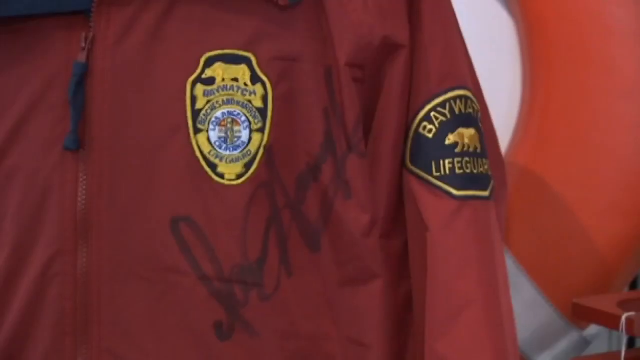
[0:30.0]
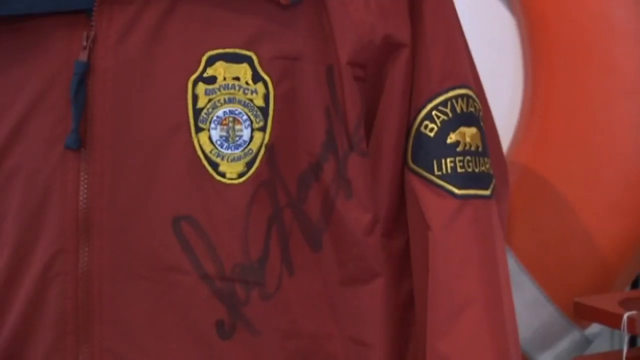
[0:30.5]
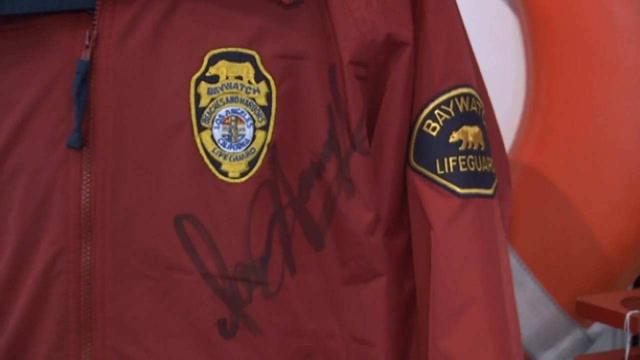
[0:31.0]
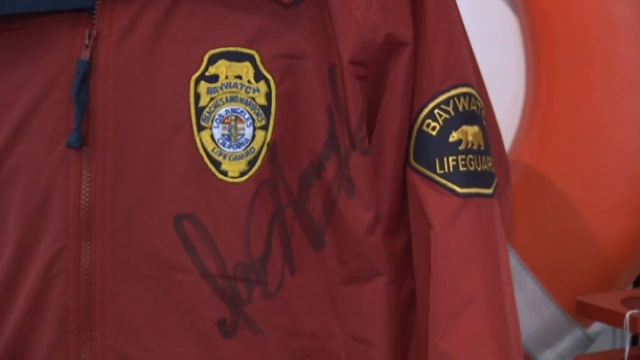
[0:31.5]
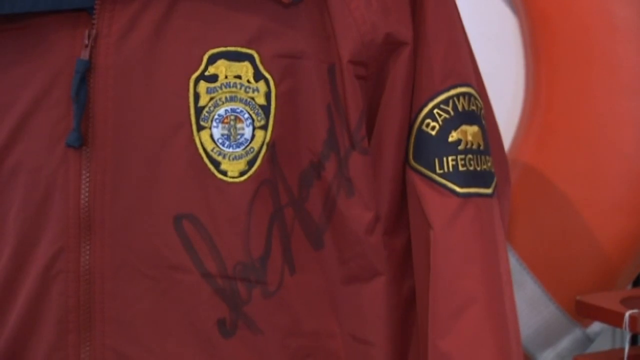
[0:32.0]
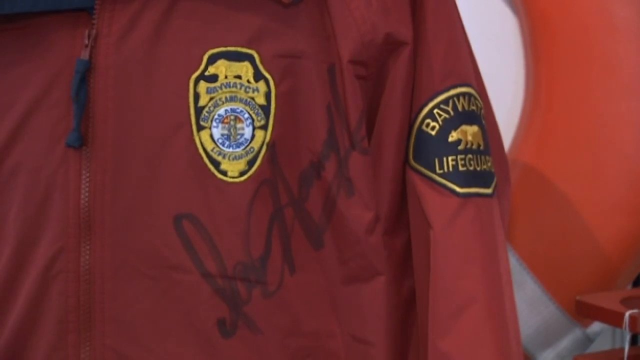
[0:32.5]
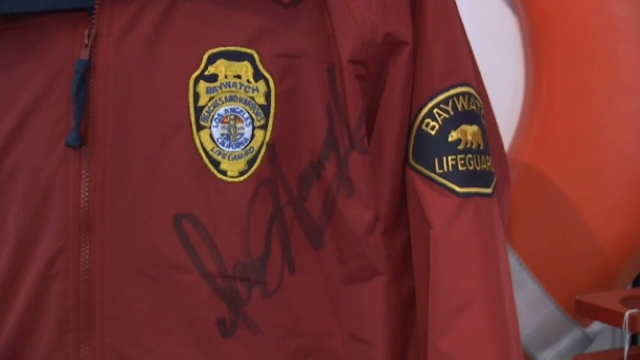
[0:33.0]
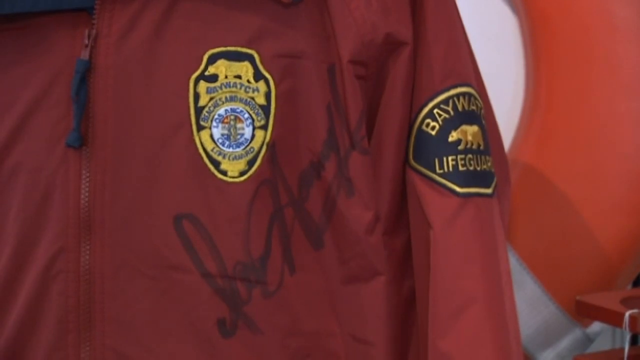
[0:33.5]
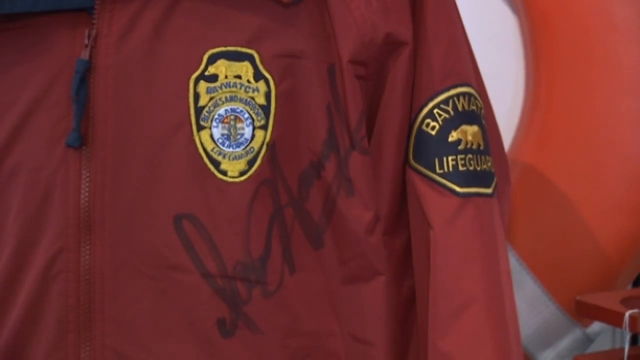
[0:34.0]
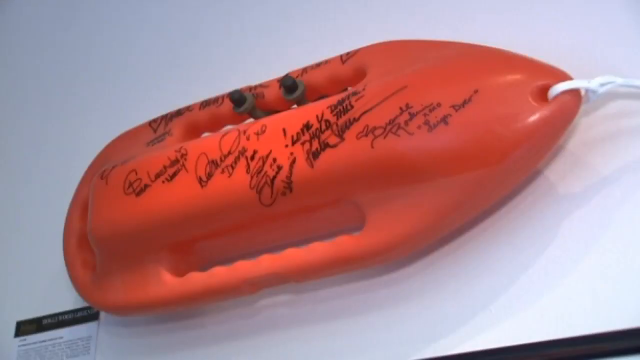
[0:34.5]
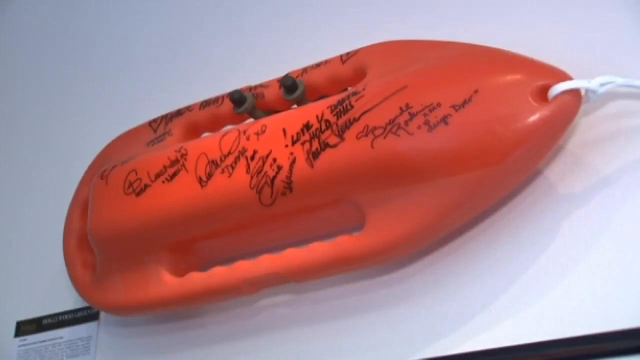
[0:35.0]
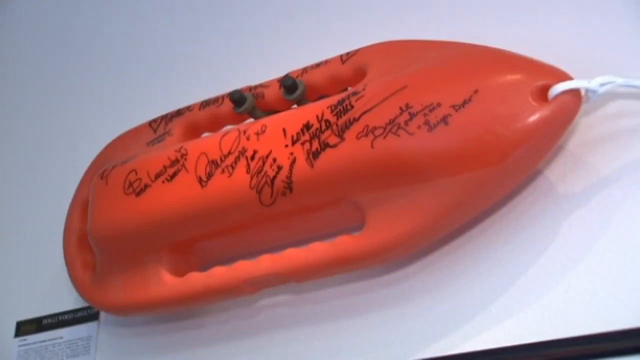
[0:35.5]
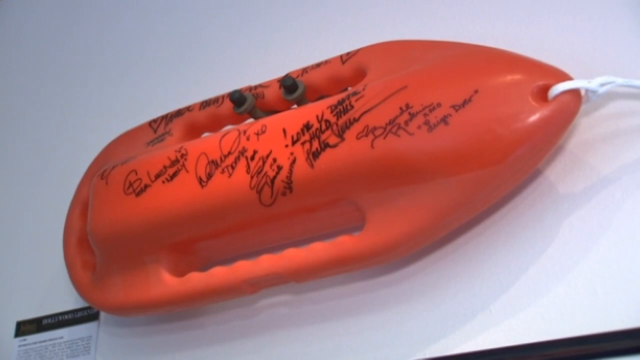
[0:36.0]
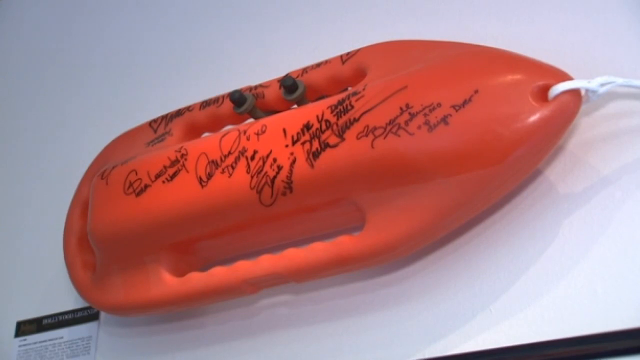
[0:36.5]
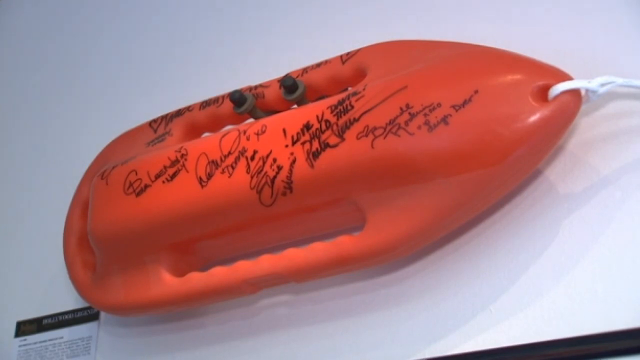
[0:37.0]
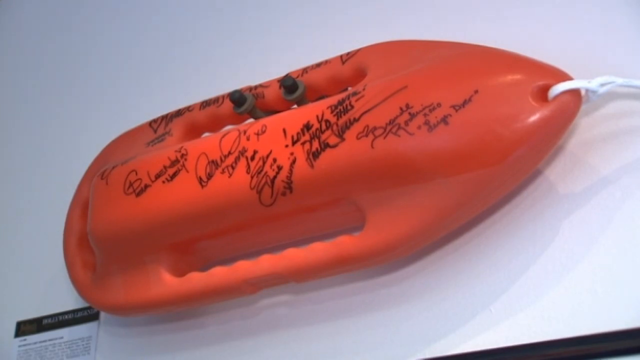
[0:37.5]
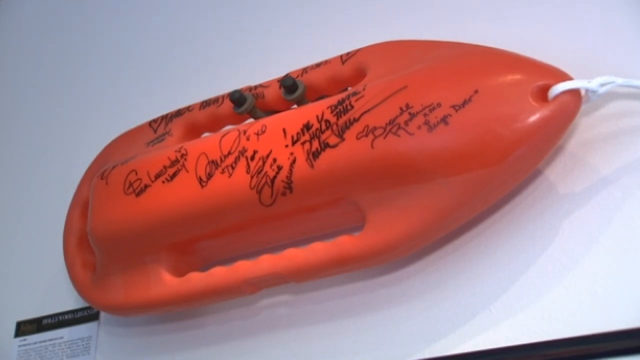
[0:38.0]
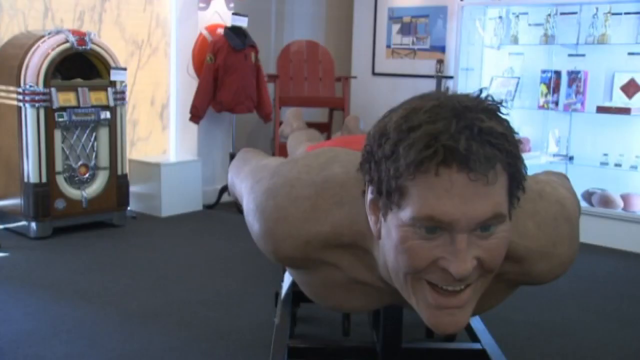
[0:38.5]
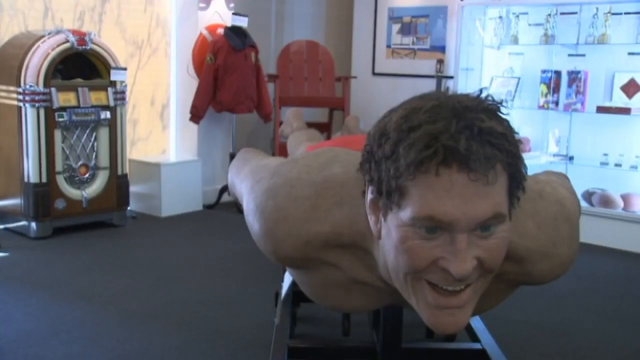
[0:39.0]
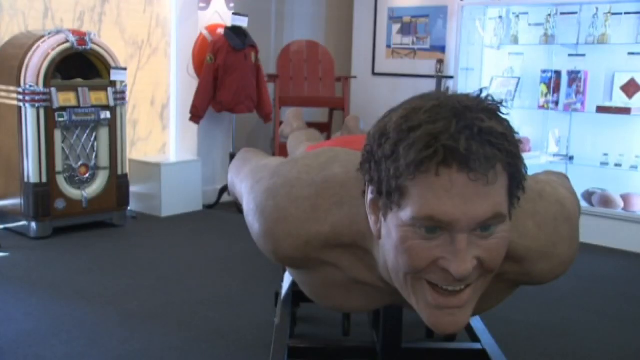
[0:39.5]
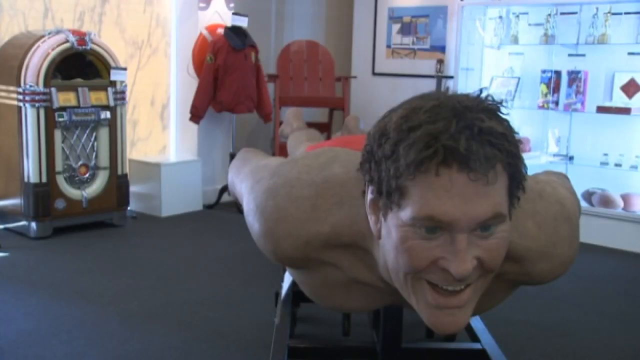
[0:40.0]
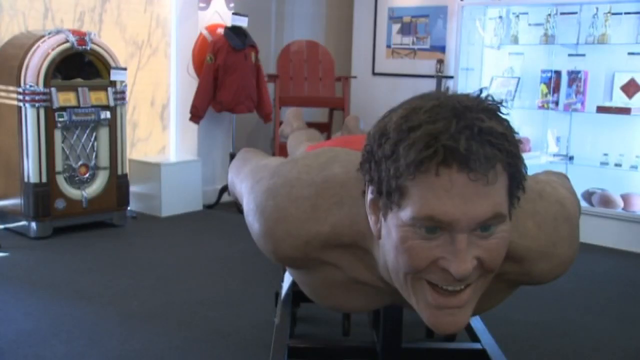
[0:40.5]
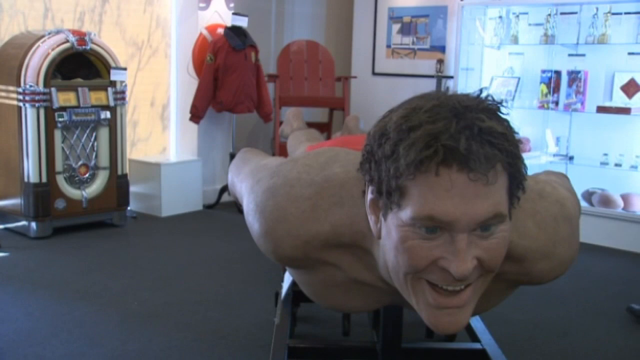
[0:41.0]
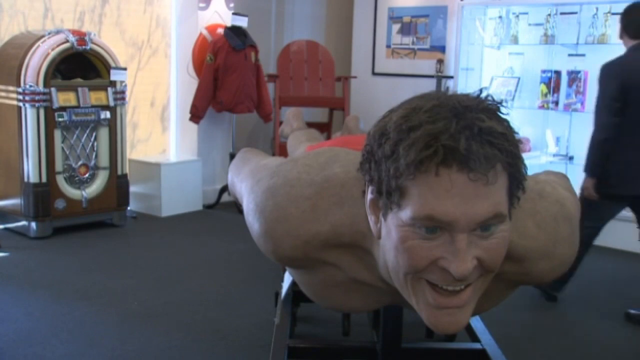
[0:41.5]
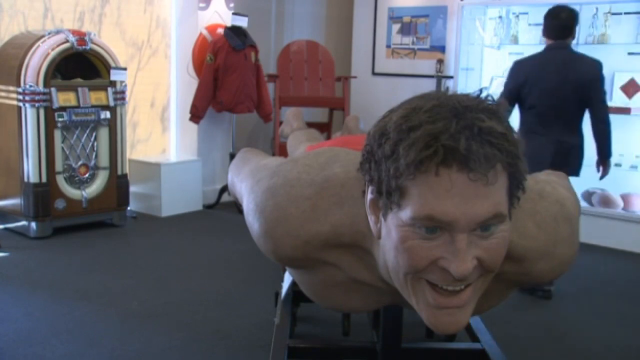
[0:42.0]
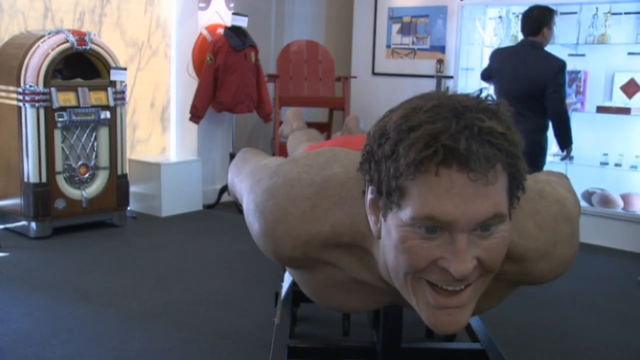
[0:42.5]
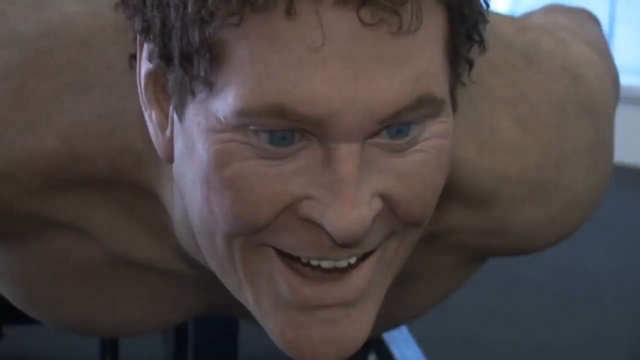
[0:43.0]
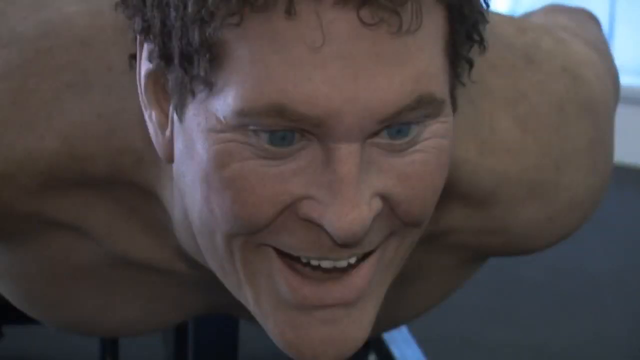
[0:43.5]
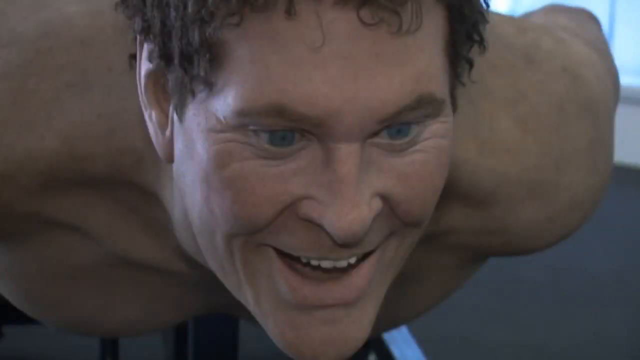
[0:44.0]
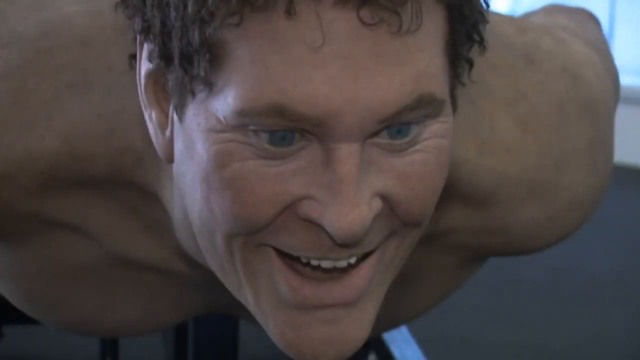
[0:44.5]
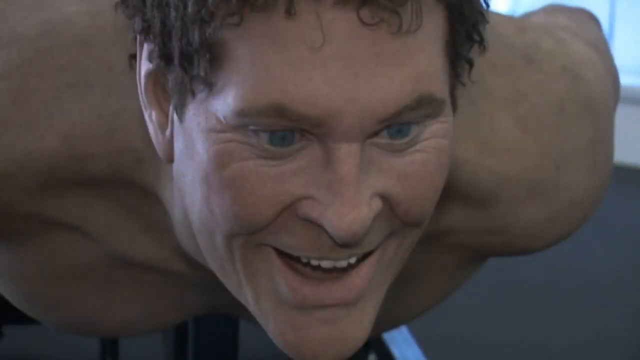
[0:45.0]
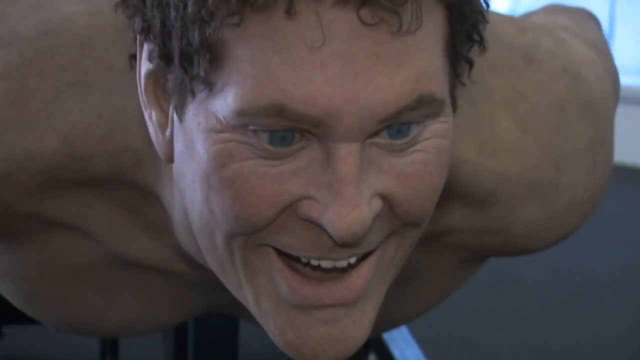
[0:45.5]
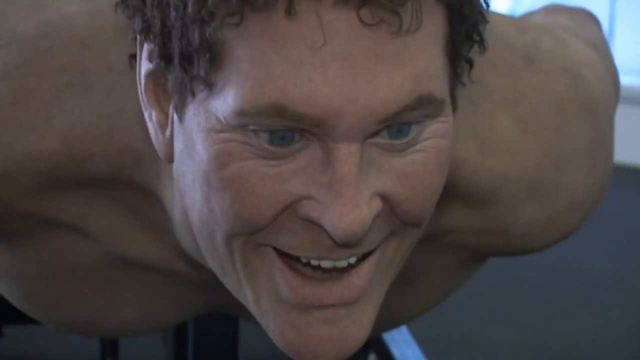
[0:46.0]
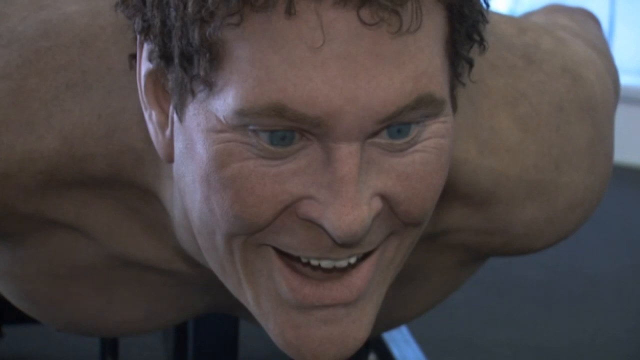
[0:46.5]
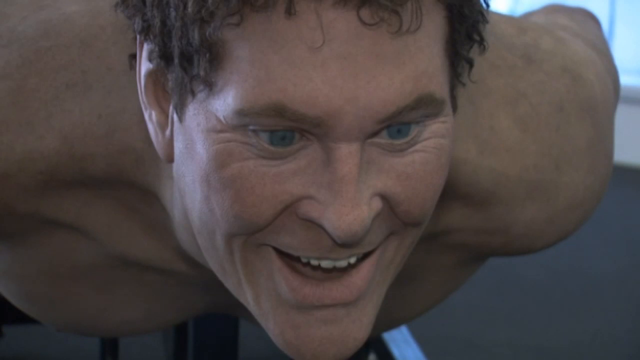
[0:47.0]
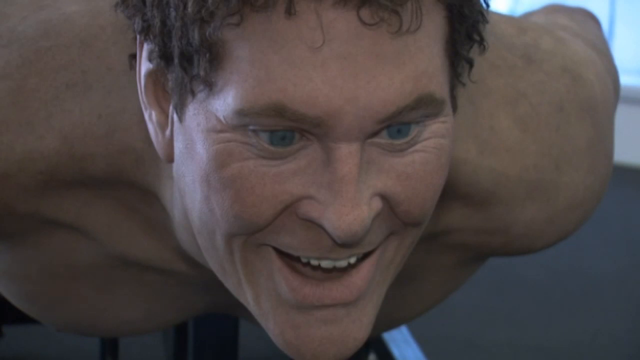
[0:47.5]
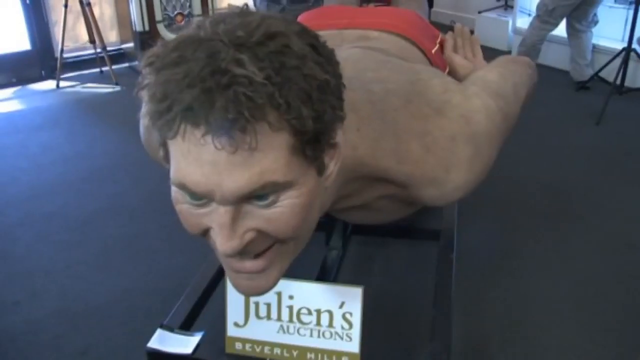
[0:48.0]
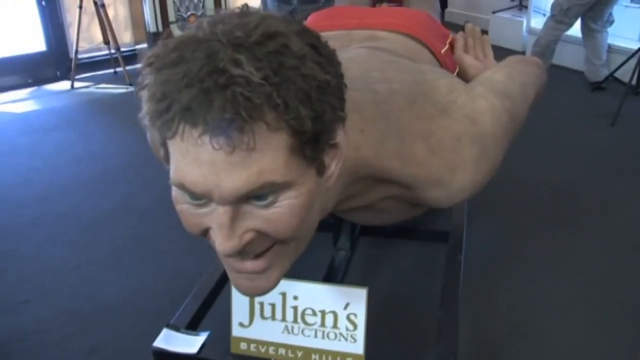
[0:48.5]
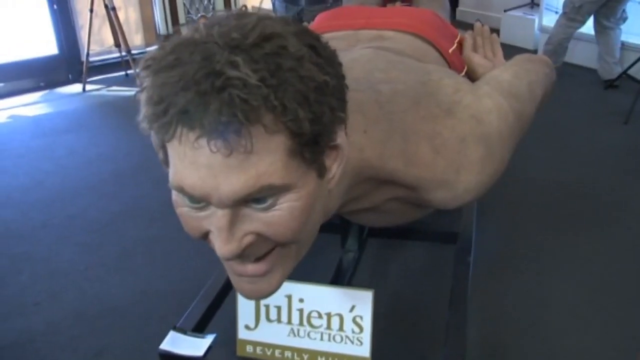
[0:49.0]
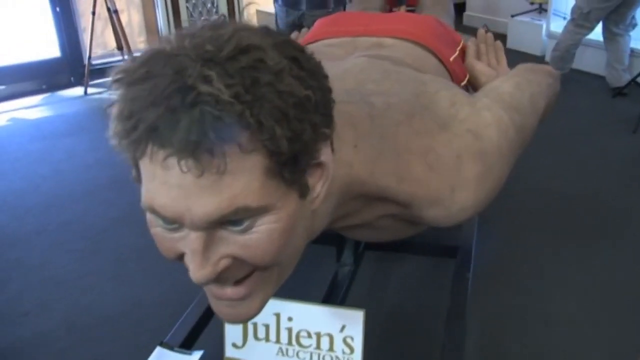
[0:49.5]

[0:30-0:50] The camera focuses in on the emblems of the California Baywatch lifeguard jacket, which is signed by David Hasselhoff on the left side. Next to the Baywatch emblem is a "Baywatch, Beaches and Harbor, Los Angeles, California lifeguard" emblem. A patch on the left shoulder reads "Baywatch," with a golden California bear like the one on the California flag and "lifeguard" below the bear; the patch has a black background with golden stitching and lettering, and the bear is golden with a golden outline. A signed lifeguard flotation rescue device follows; it looks signed by multiple people, apparently cast members of the Baywatch show, with several signatures clearly visible but not readable. Next are what look like several items for auction: a jukebox in the background on the left of the screen, the Baywatch official lifeguard jacket, a life preserver behind the jacket, and an outdoor beach chair painted red or lifeguard orange. What looks like a wax figure of David Hasselhoff lies prone, face down on a surfboard or some type of flotation device, as if going out to probably rescue someone; he smiles and looks forward and upward. A man in a suit walks into the frame from the right, pointing or apparently showing someone items in a glass display case.